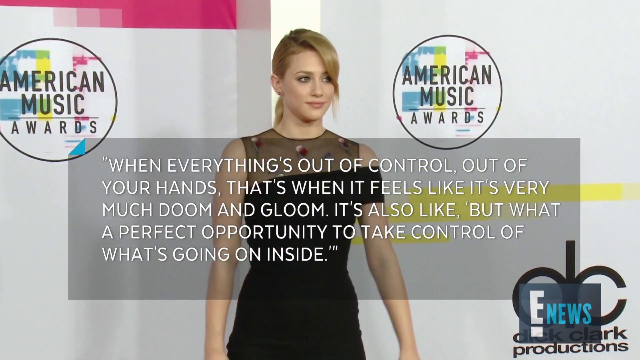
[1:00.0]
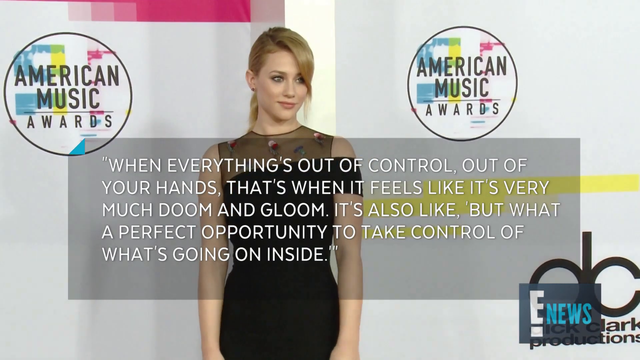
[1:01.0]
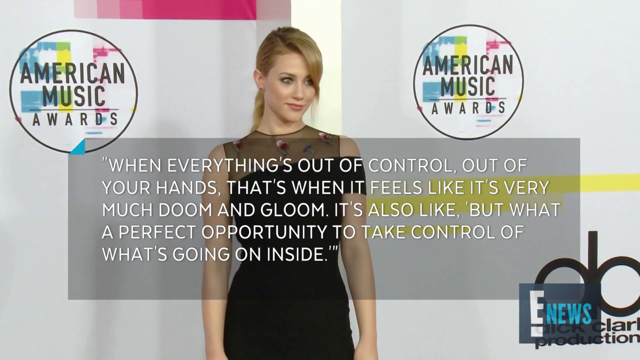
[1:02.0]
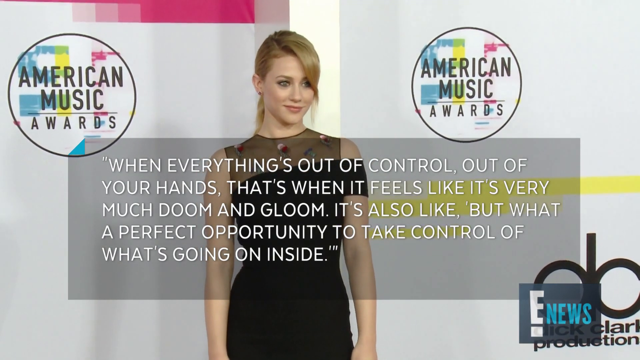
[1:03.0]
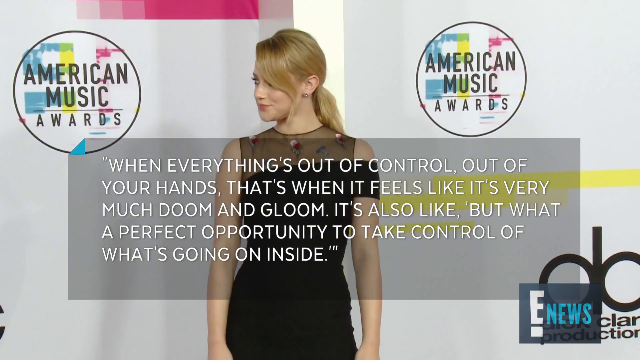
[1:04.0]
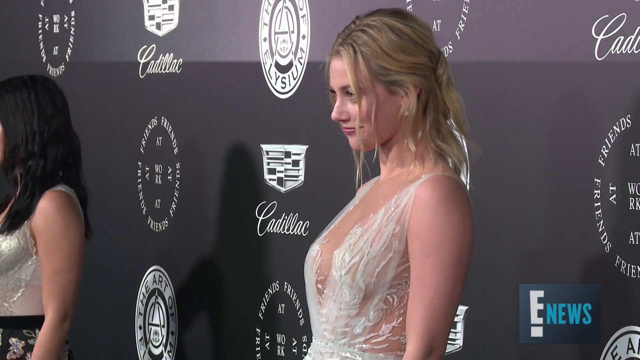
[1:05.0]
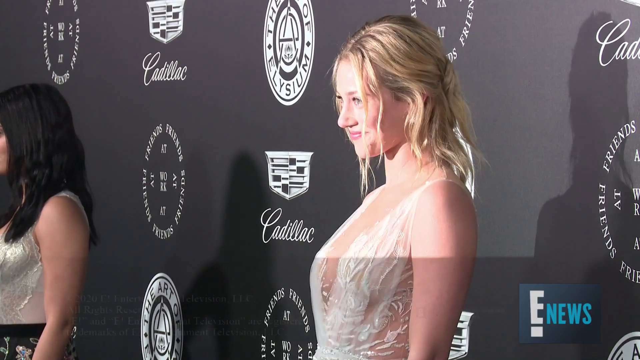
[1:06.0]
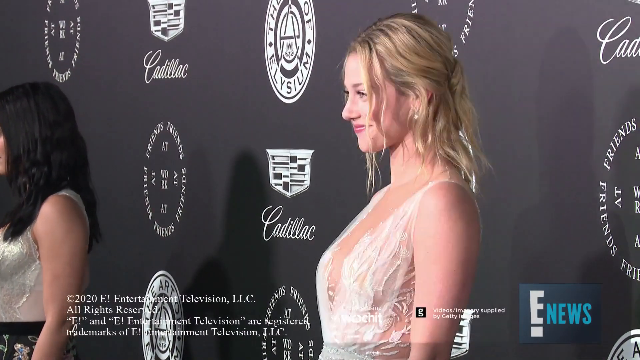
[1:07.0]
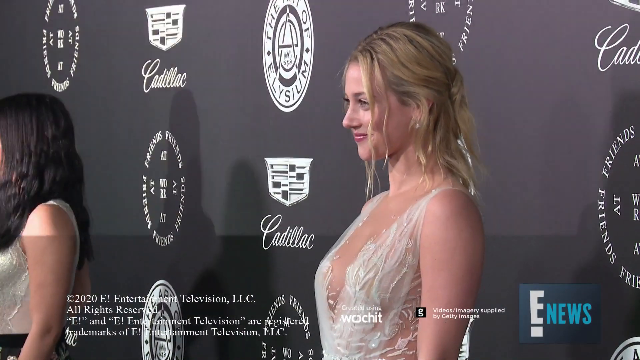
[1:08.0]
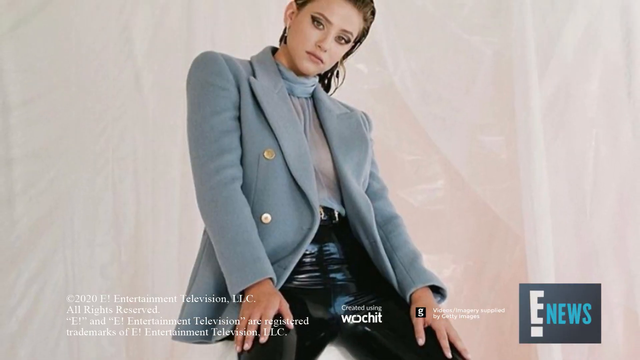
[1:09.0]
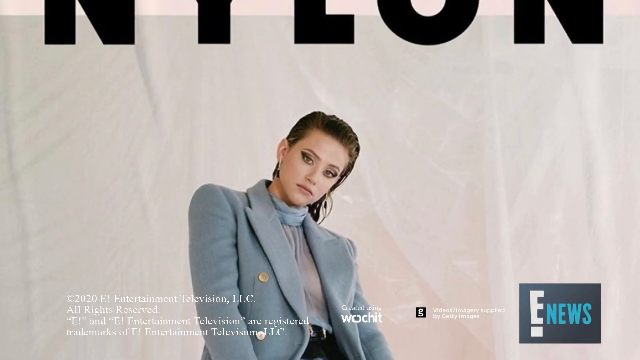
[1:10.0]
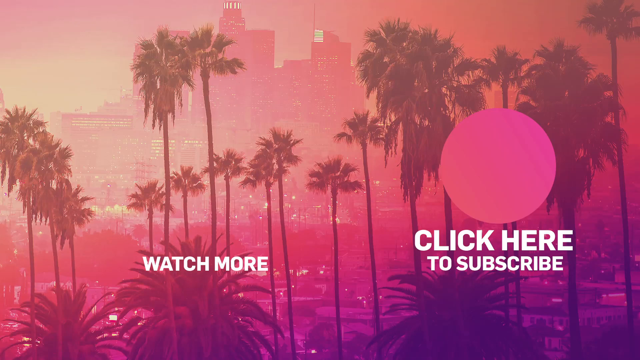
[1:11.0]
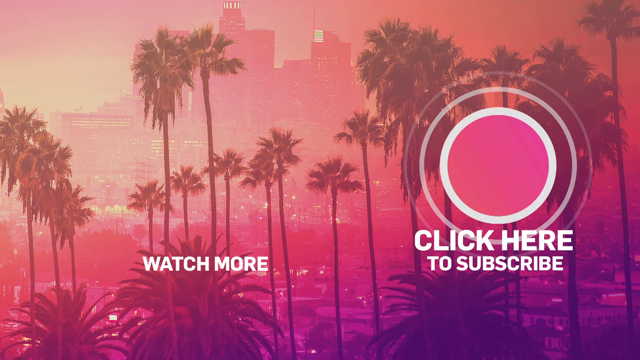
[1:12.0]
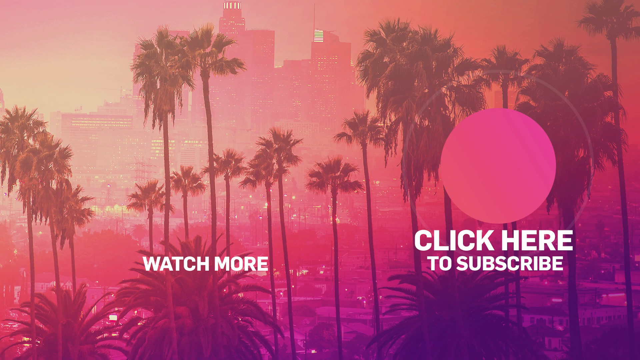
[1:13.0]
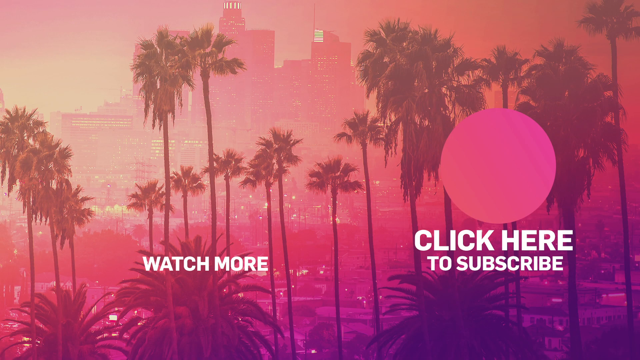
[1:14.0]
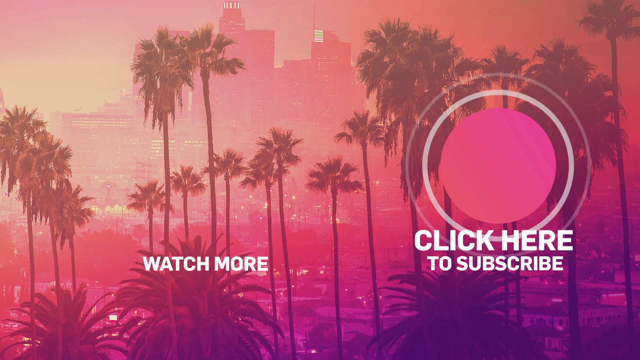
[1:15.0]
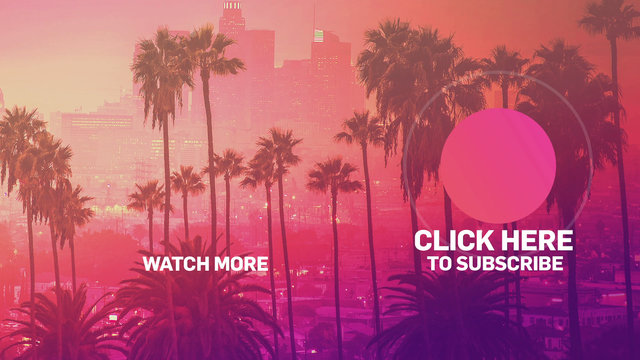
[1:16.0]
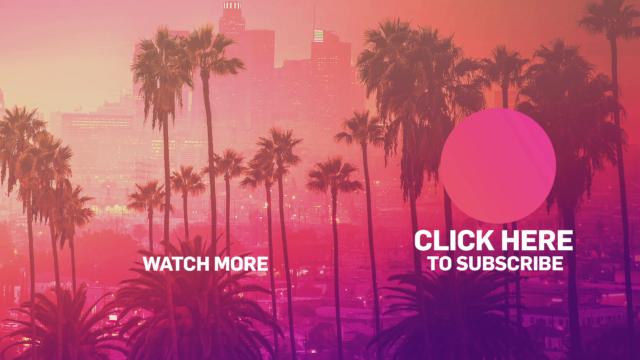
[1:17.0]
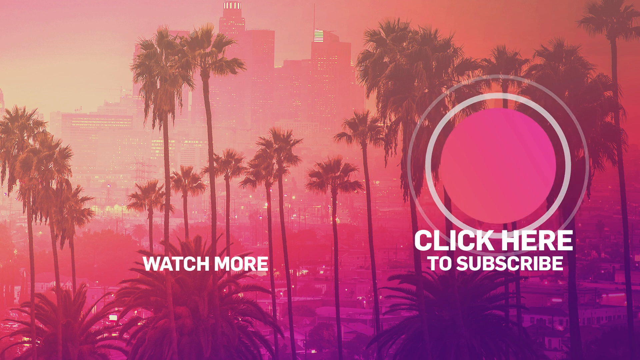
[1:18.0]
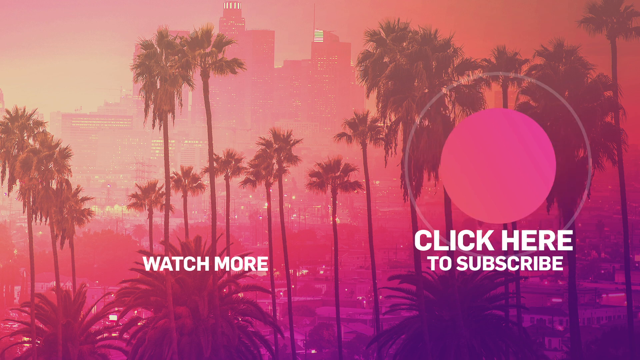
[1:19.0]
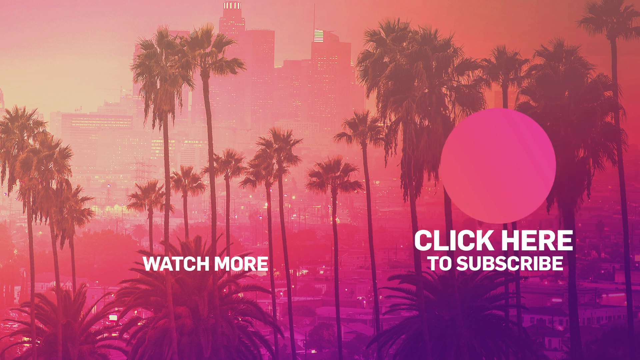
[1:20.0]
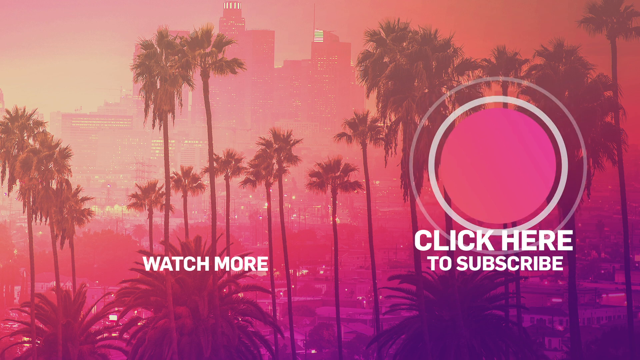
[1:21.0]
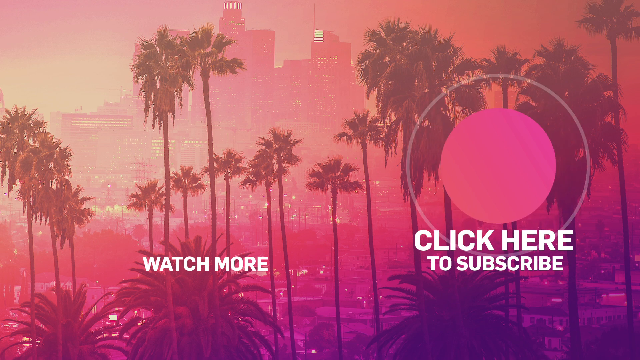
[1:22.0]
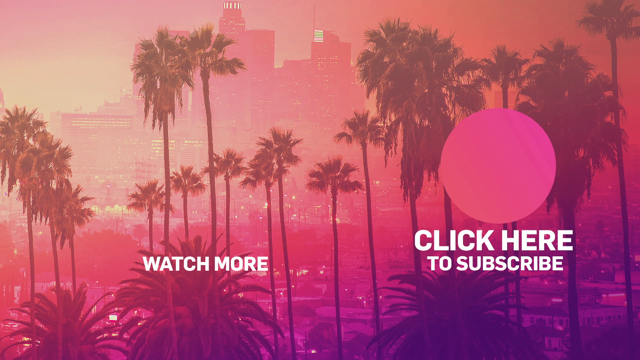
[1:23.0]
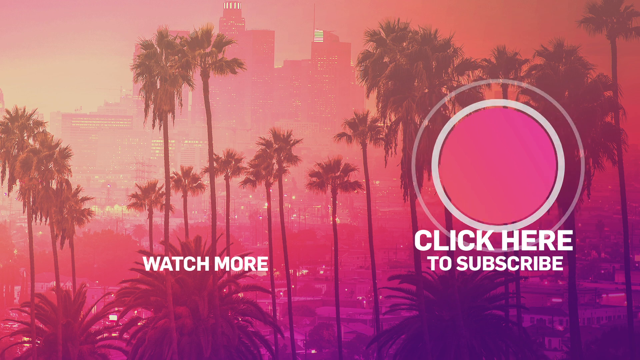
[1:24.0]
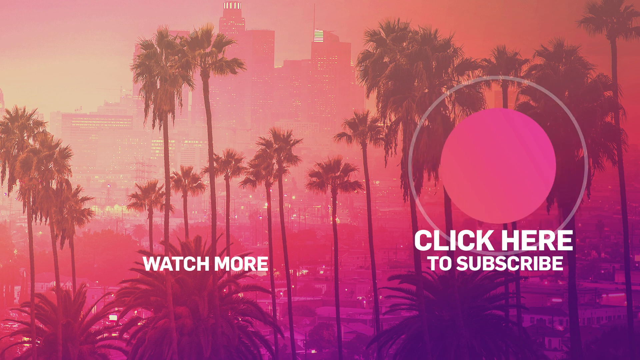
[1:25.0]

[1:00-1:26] Lily Reinhardt, apparently an actress, is photographed in a black dress with a kind of sheer top and a sleeve that kind of hangs off her left arm, in front of the mirror, as the quote "out of your hands, that's when it feels like it's very much doom and gloom. It's also like, but what a perfect opportunity to take control of what's going on inside" appears. She is photographed again, looking around and posing for the photo. At a different event she wears a white gown with a plunging neckline, her hair kind of curly and in waves, semi-pulled back, in front of a wall with a very prominent Cadillac logo, and she is smiling. The image of her posed on Nylon magazine in a blue suit jacket and vinyl pants appears again. The video closes on an image that looks to be Los Angeles in a pink hue, with palm trees and a building in the background and the text "click here to subscribe".